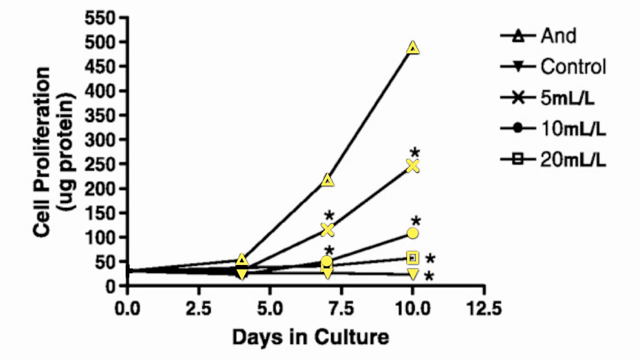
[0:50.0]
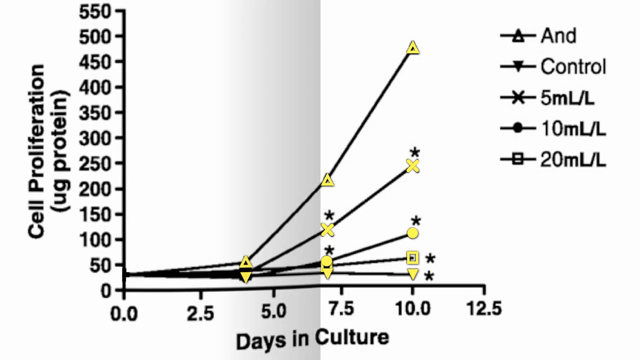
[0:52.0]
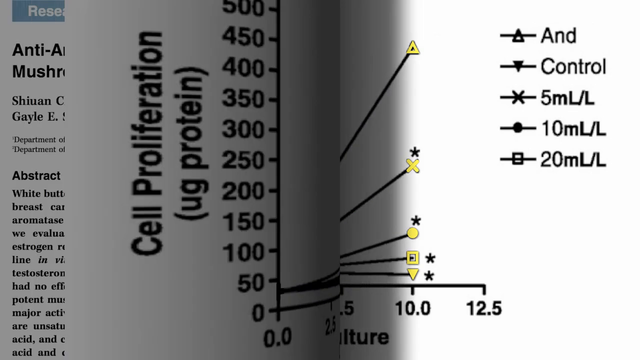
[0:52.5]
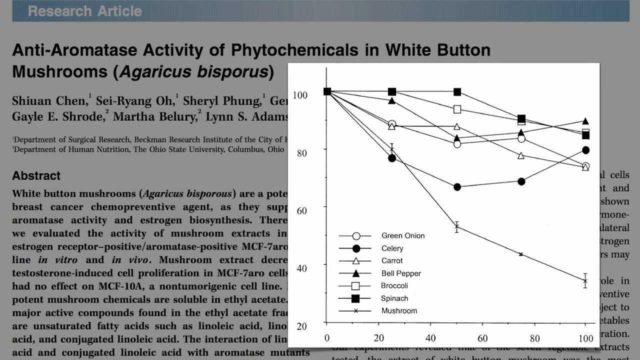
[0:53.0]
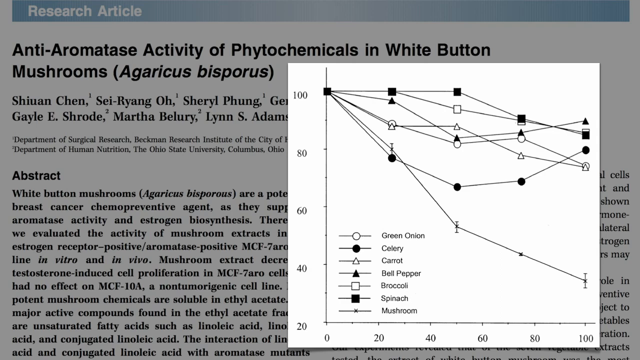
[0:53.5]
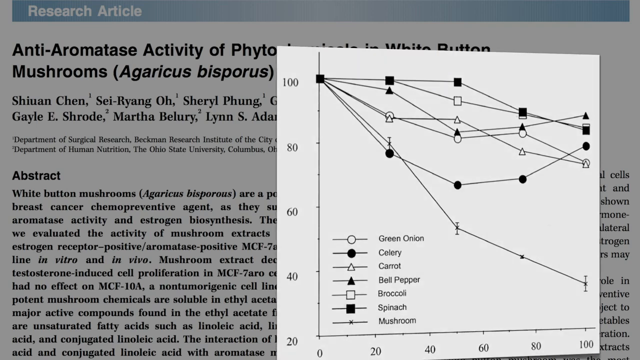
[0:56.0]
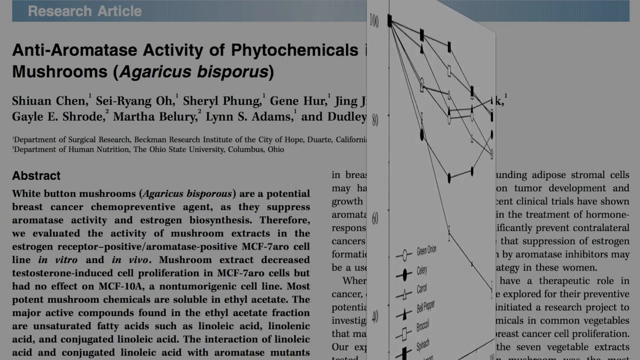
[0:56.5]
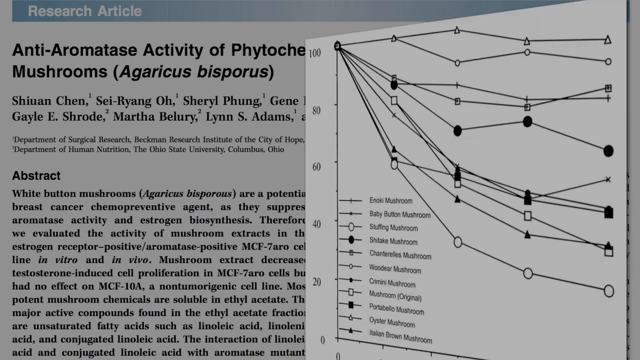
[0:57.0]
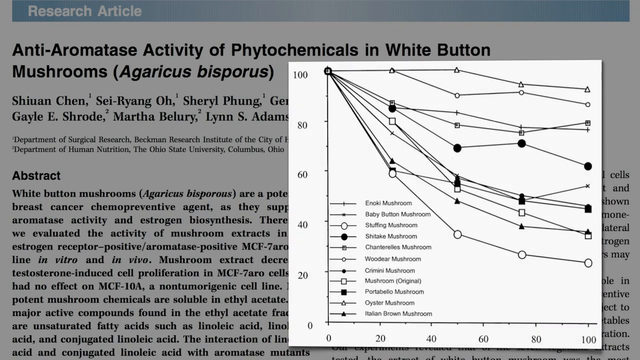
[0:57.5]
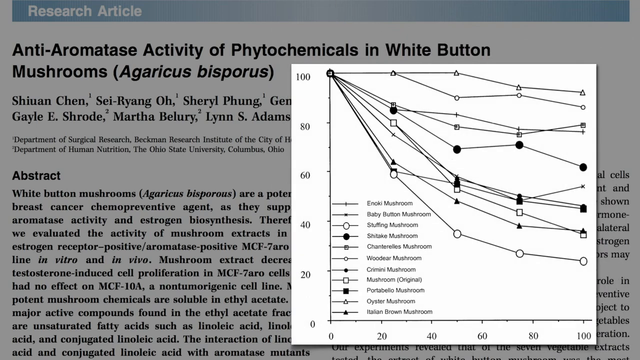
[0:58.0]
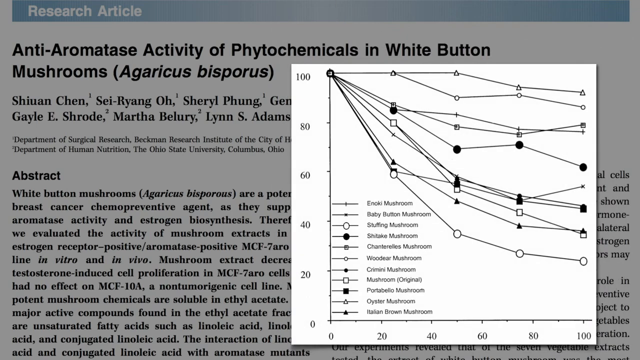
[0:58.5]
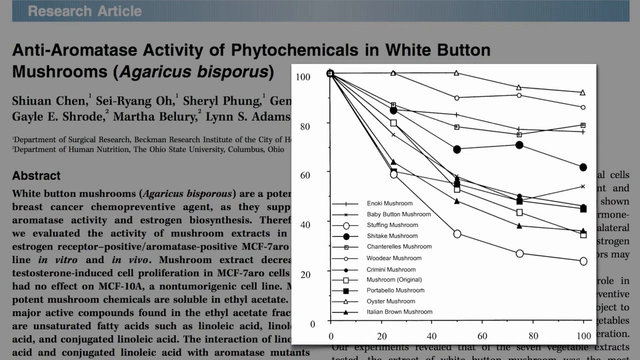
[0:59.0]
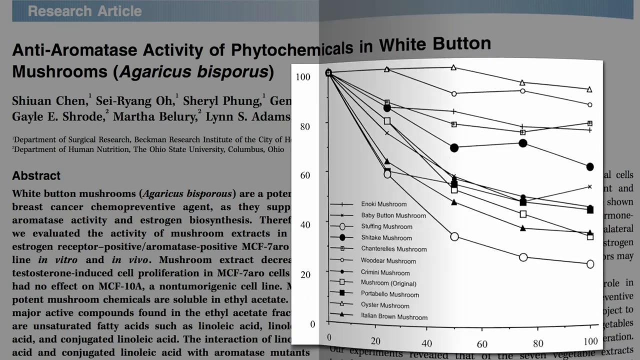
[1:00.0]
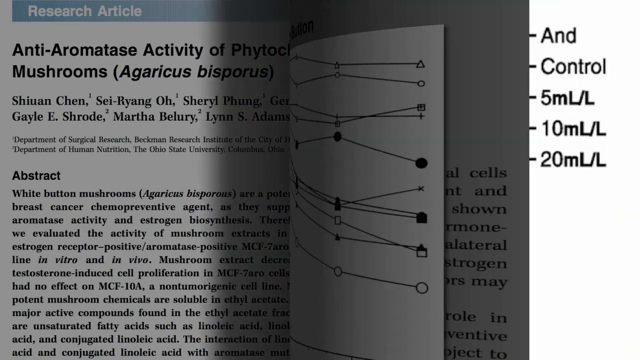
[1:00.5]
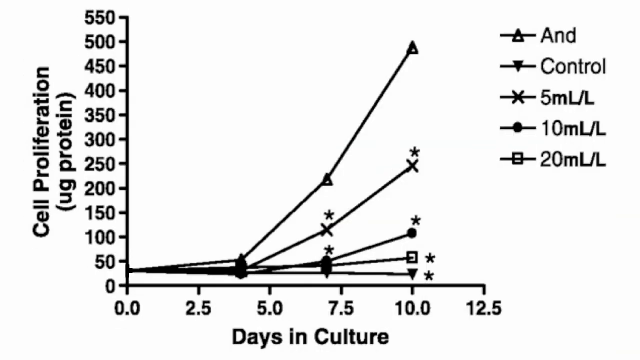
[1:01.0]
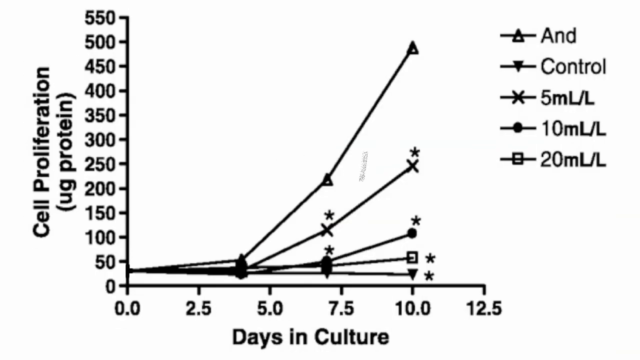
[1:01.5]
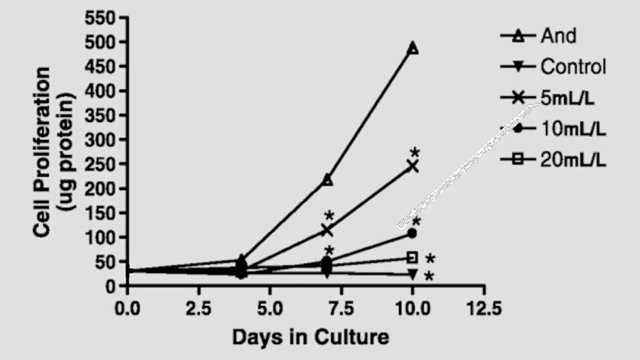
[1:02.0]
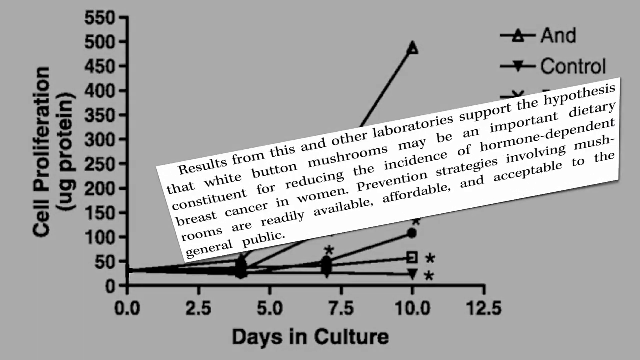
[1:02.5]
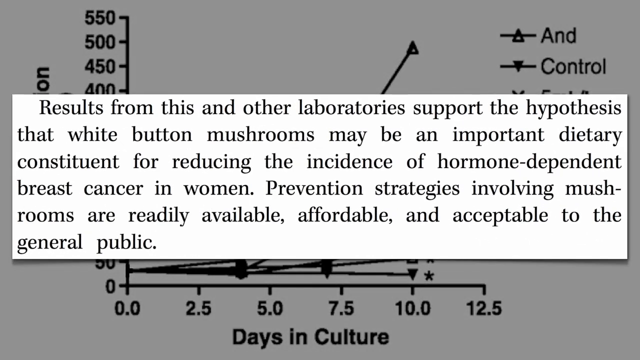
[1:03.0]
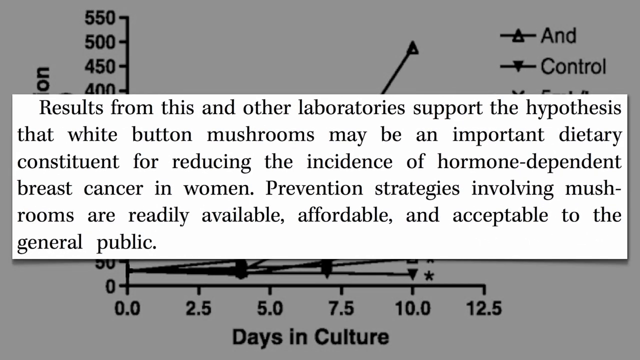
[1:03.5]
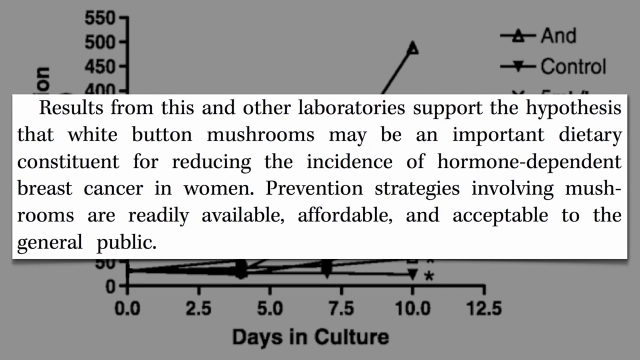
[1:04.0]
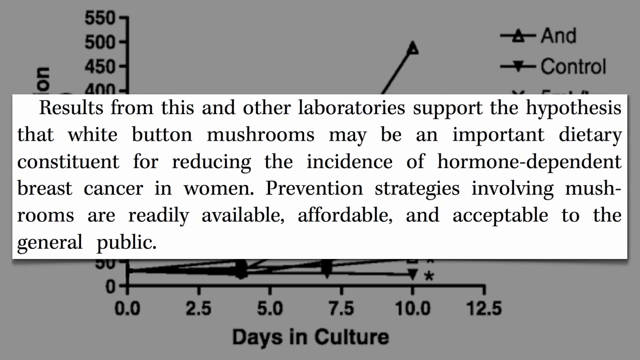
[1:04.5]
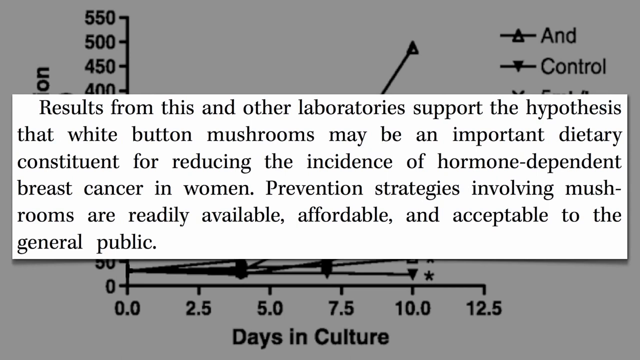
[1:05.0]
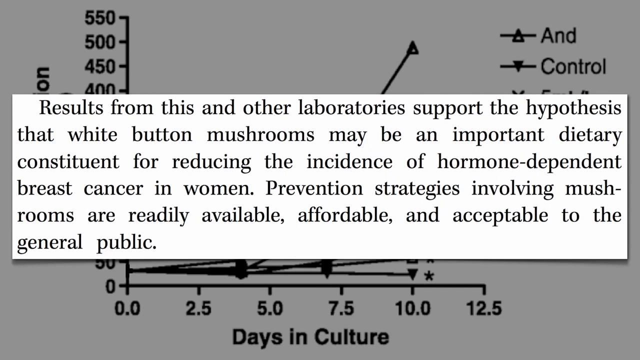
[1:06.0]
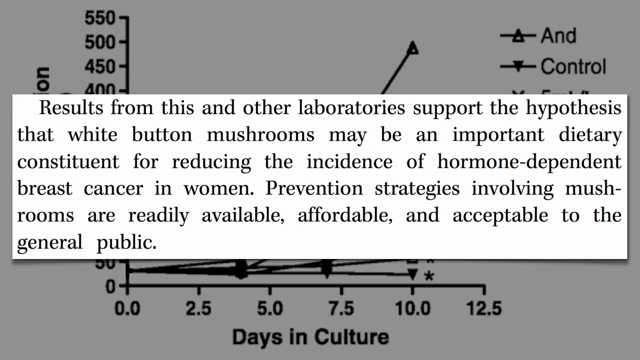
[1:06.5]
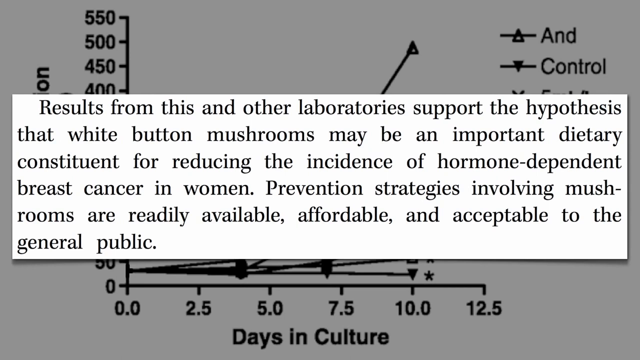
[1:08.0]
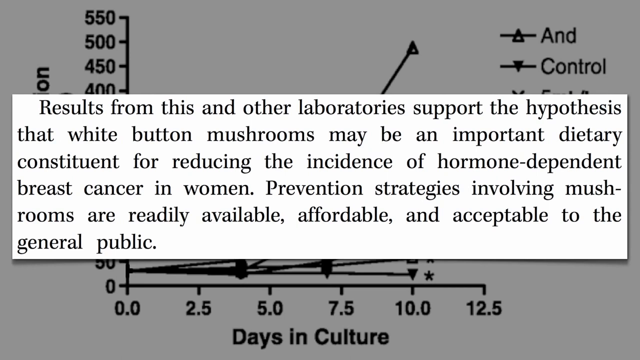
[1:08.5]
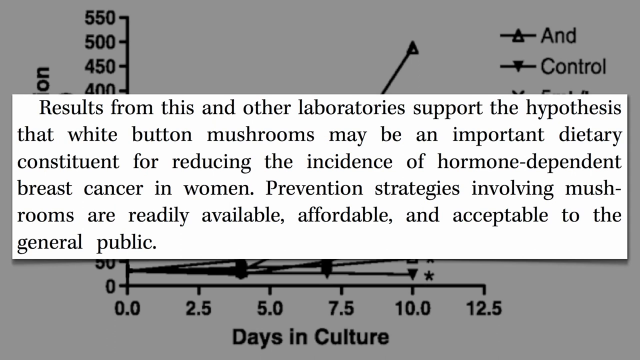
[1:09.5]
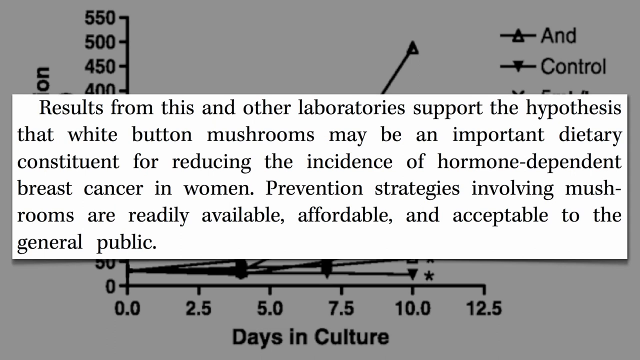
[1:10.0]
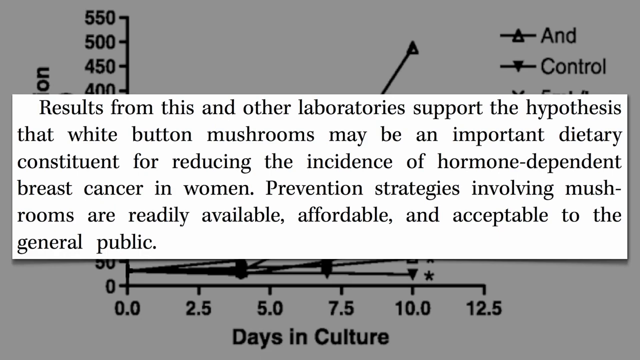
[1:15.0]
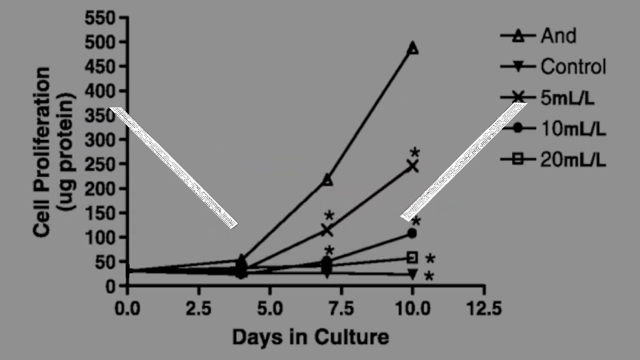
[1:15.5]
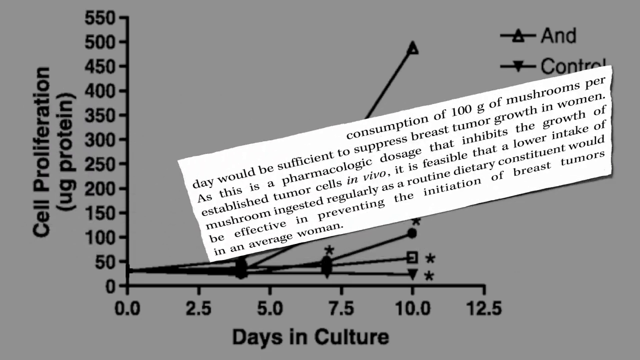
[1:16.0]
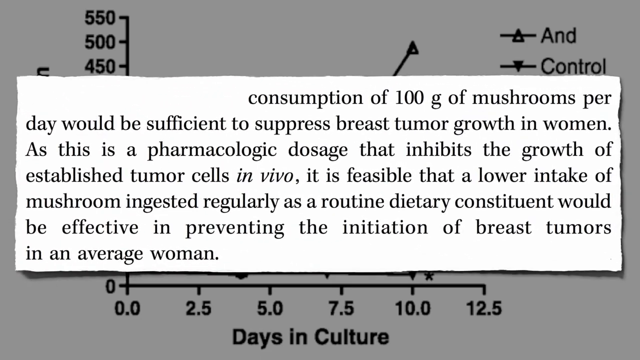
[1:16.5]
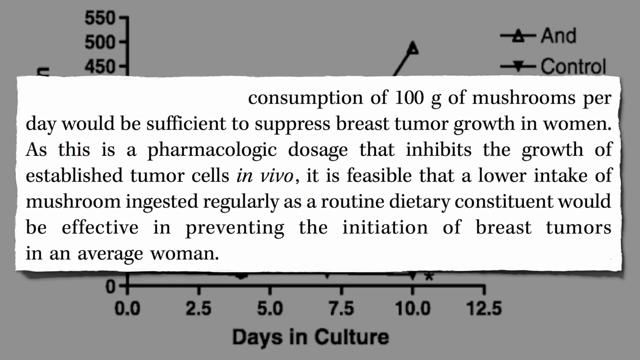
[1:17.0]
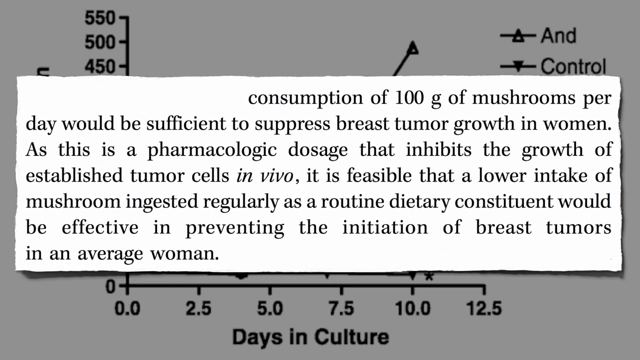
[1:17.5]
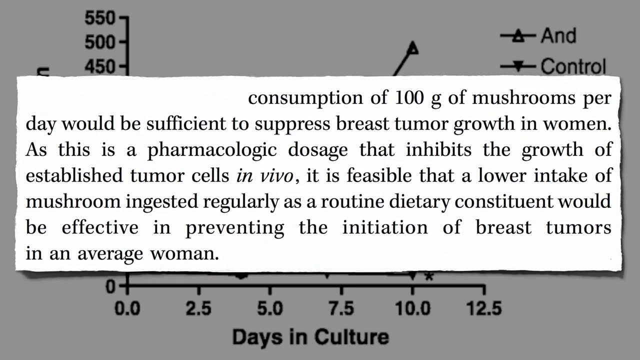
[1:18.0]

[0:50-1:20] A graph is shown. The screen then transitions to an article in the background with another chart on the right side of the screen. After about three seconds, the chart flips and rotates in an effect to display a different chart. The article in the background is titled "anti-aromatase activity of phytochemicals in white mushrooms," with the mushroom's biological name, "Agaricus Bisporus," in braces beside it. Below that are the names of the research article's authors, the abstract header, and the abstract write-up. The chart flips again to display a different chart that fills up the entire screen, and then a text pop-up of black text on a white background appears. It reads "results from this and other laboratories support the hypothesis that white button mushrooms may be an important dietary constituent for reducing the incidence of hormone-dependent breast cancer in women," followed by text about mushrooms being "readily available, affordable, and acceptable to the general public." This text stays on the screen for a couple of seconds, then disappears, and another text pop-up appears with a graph still in the background, containing more text about the research on mushrooms.